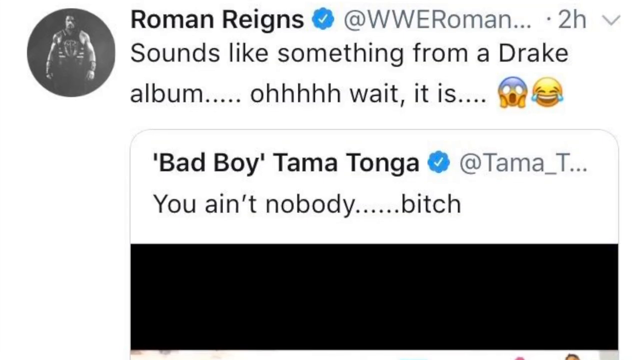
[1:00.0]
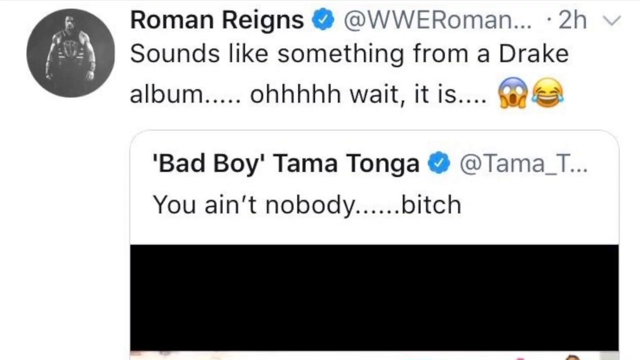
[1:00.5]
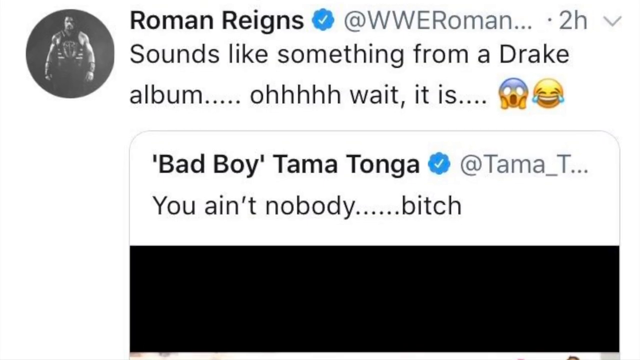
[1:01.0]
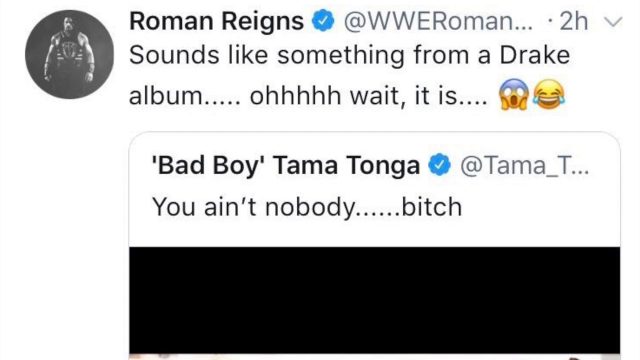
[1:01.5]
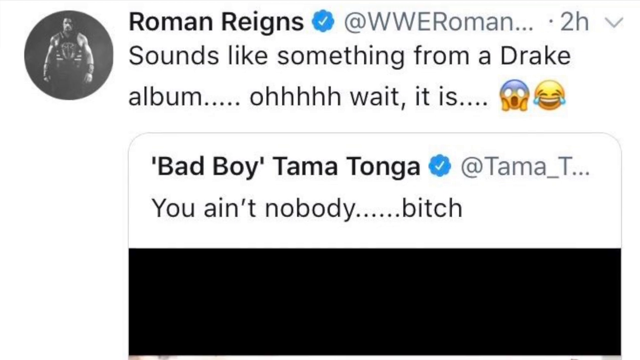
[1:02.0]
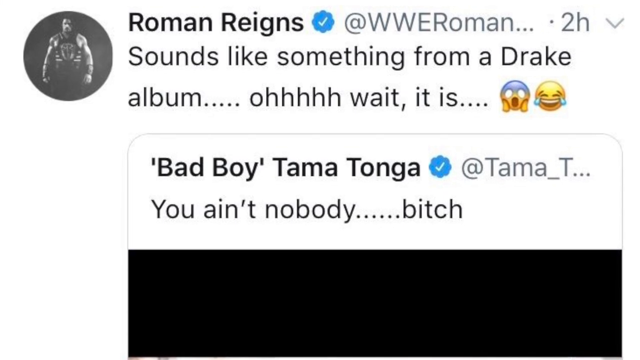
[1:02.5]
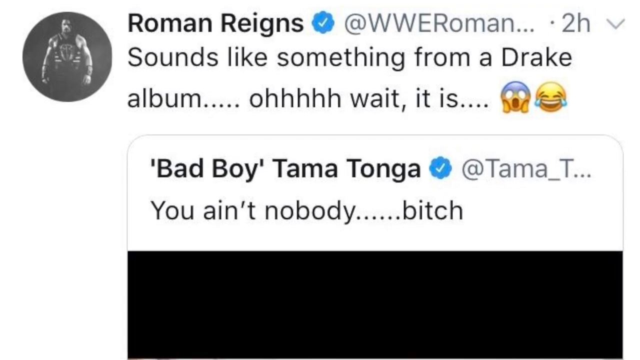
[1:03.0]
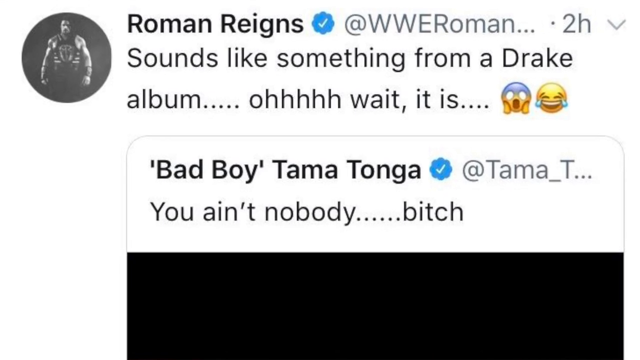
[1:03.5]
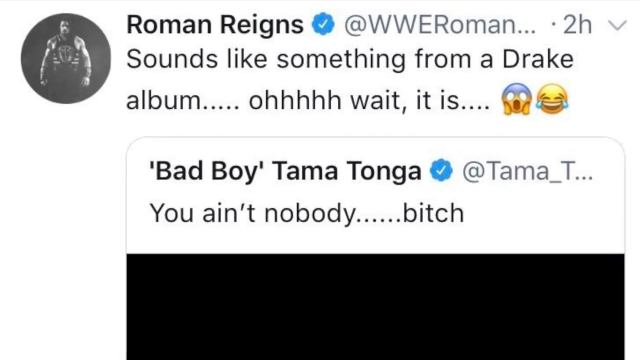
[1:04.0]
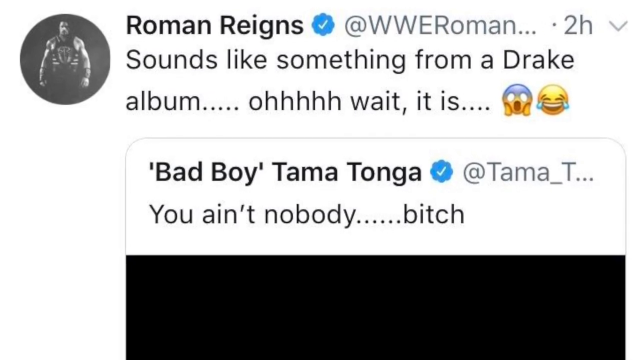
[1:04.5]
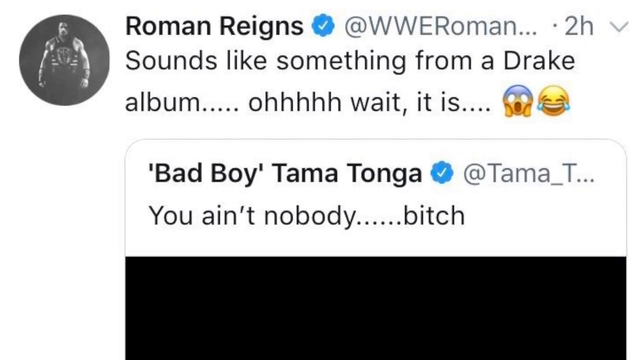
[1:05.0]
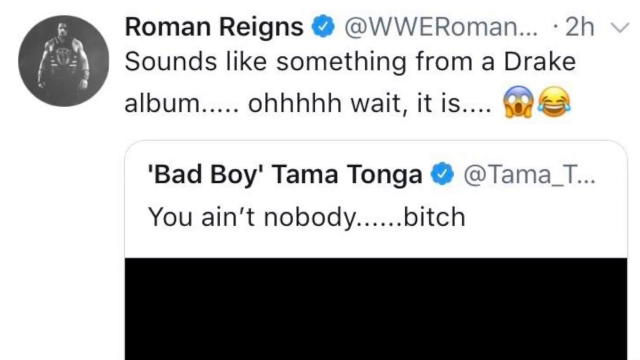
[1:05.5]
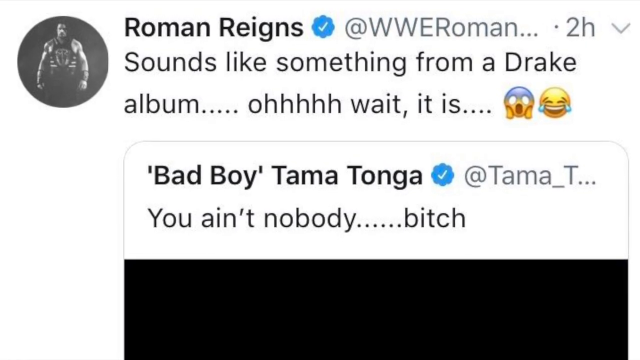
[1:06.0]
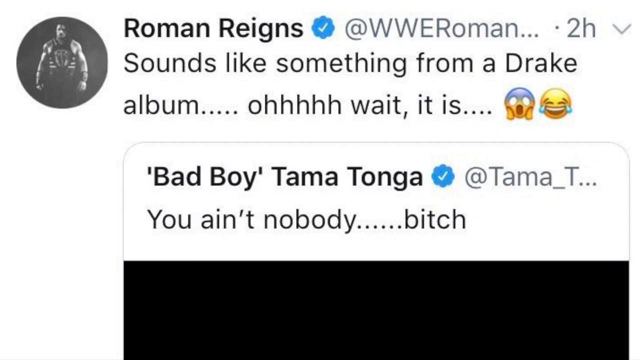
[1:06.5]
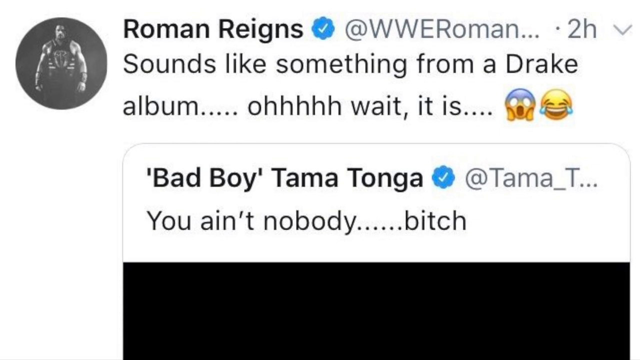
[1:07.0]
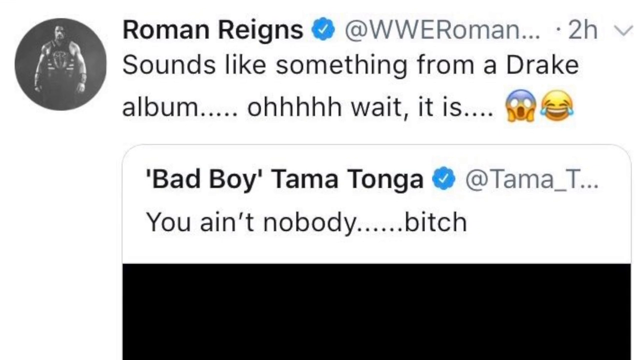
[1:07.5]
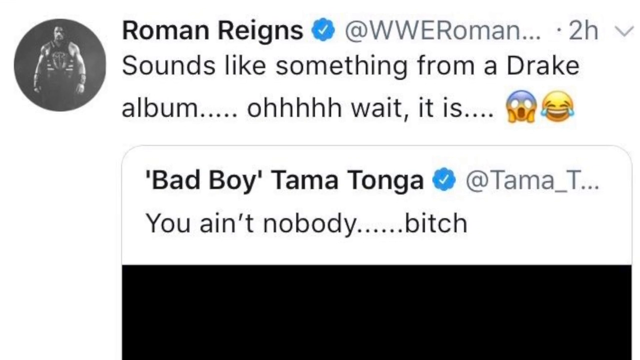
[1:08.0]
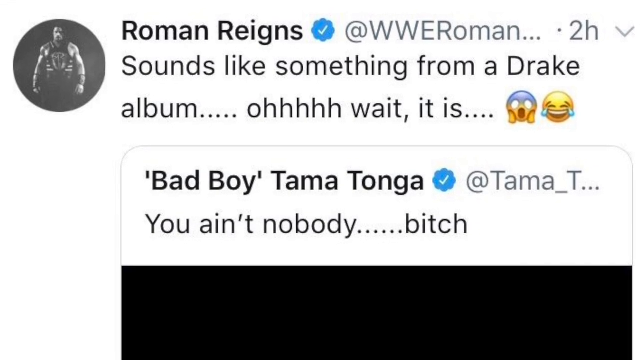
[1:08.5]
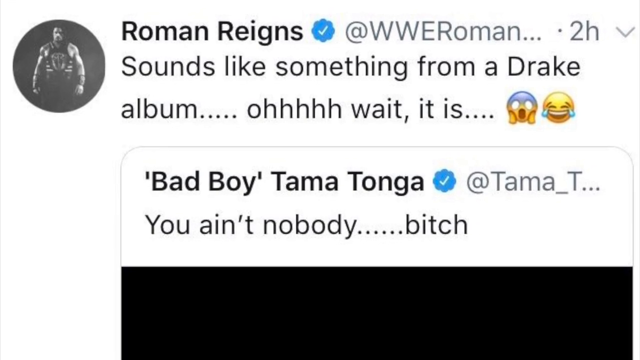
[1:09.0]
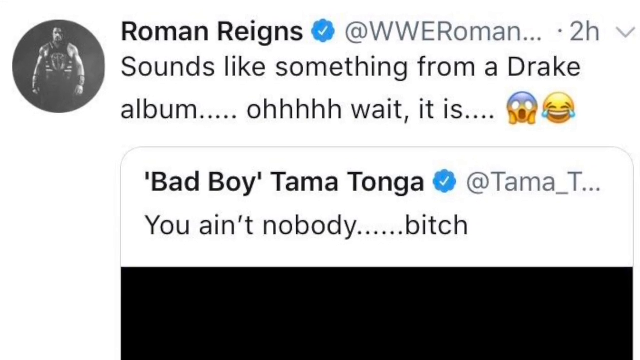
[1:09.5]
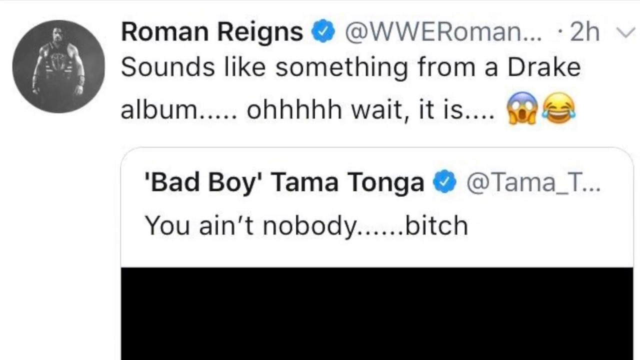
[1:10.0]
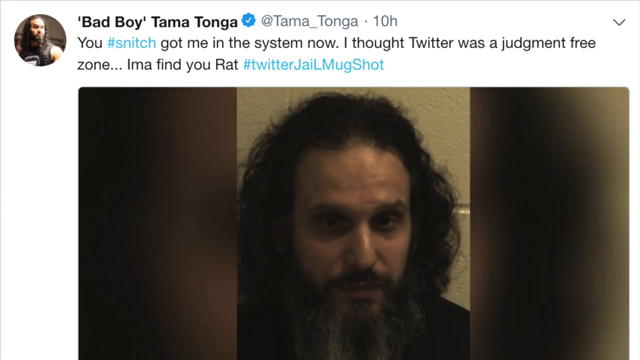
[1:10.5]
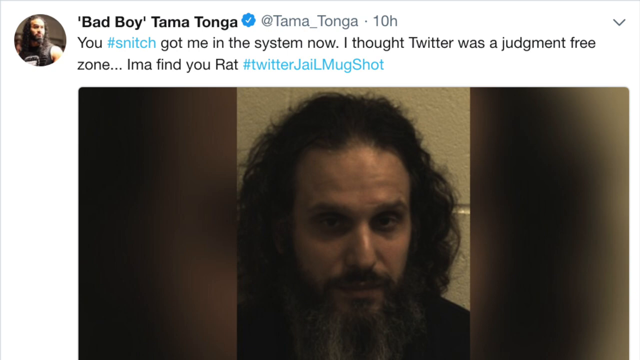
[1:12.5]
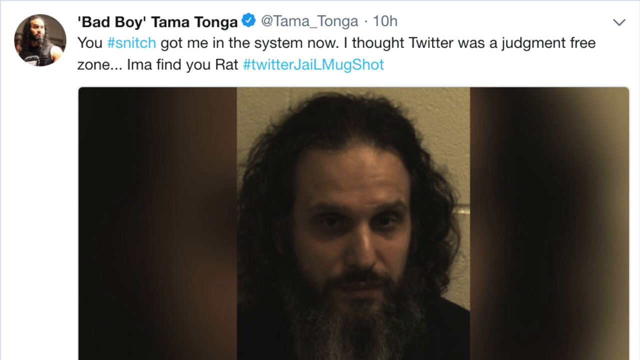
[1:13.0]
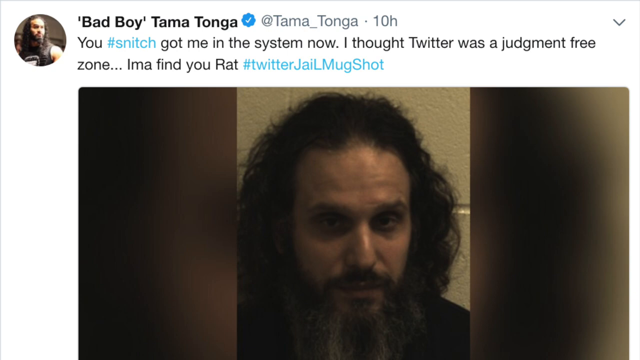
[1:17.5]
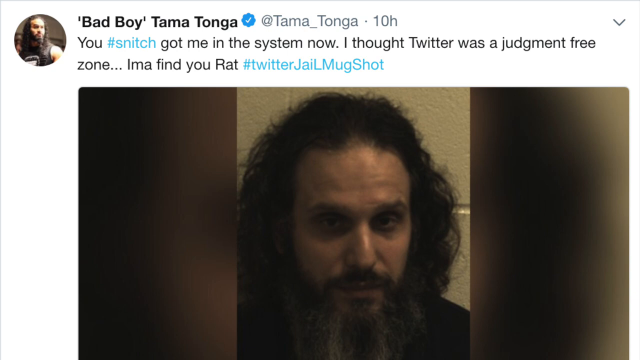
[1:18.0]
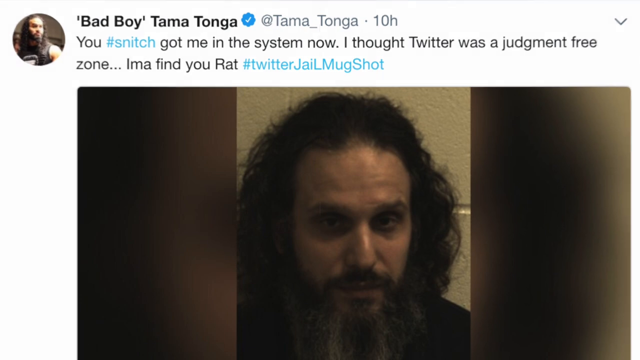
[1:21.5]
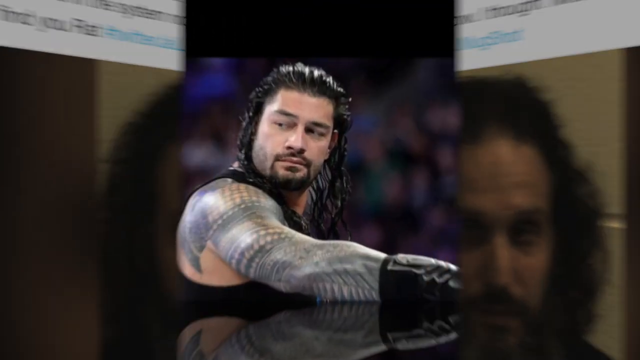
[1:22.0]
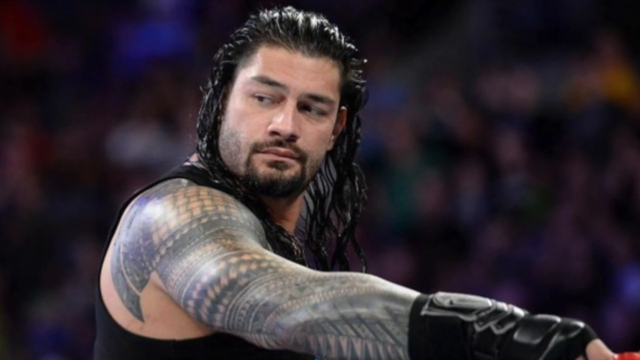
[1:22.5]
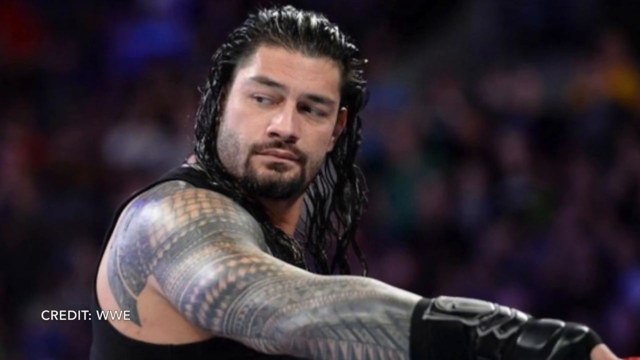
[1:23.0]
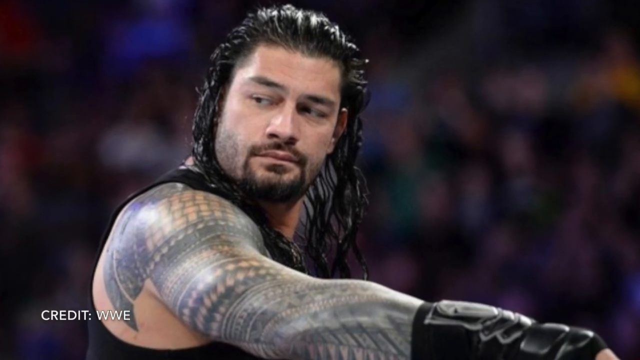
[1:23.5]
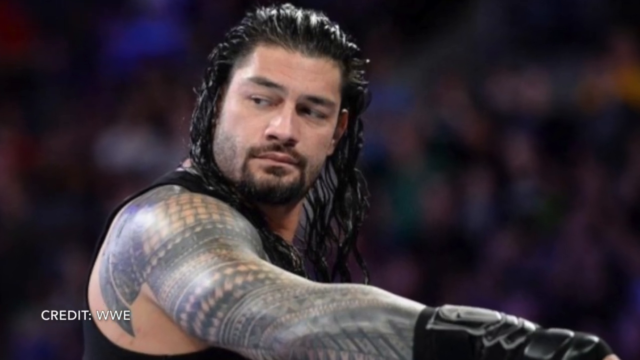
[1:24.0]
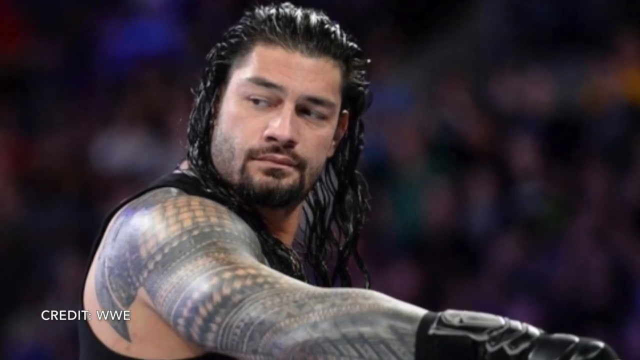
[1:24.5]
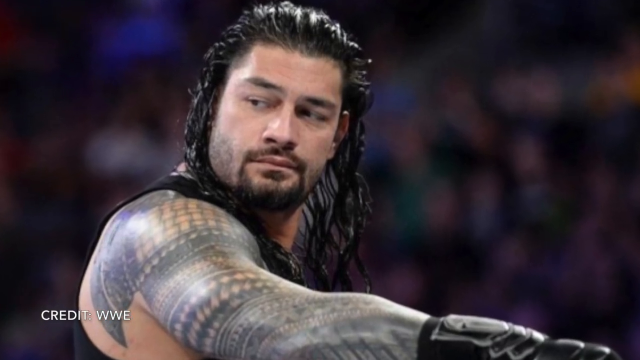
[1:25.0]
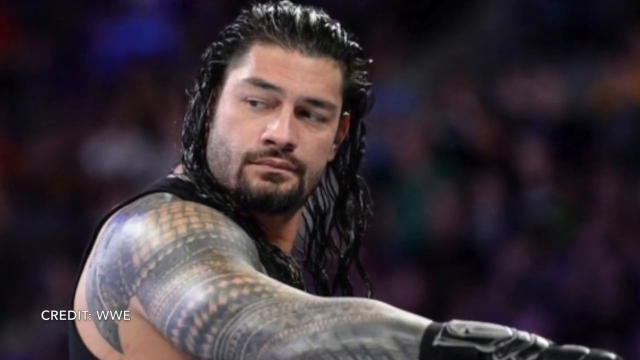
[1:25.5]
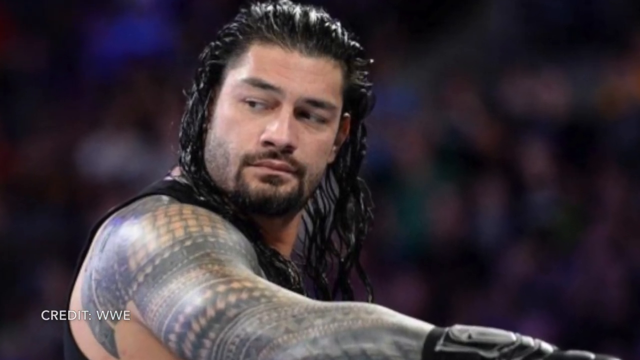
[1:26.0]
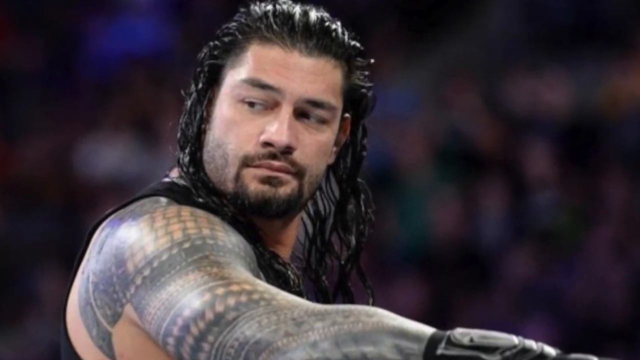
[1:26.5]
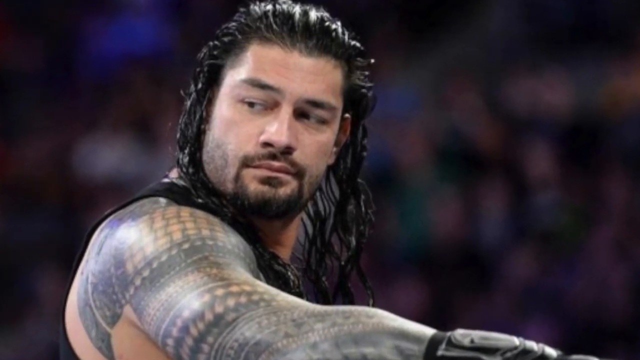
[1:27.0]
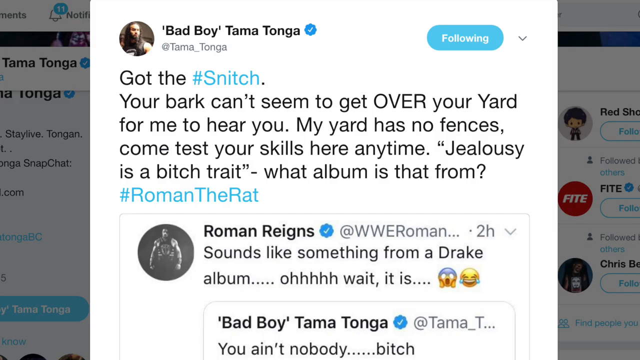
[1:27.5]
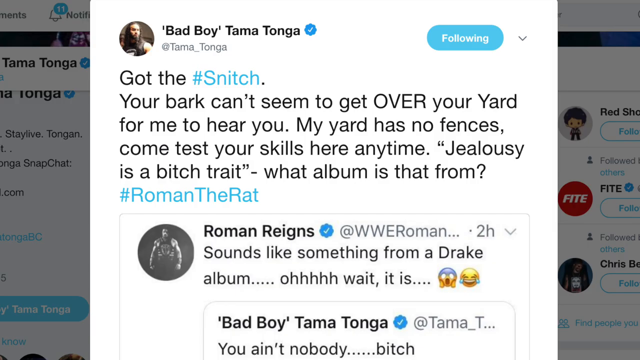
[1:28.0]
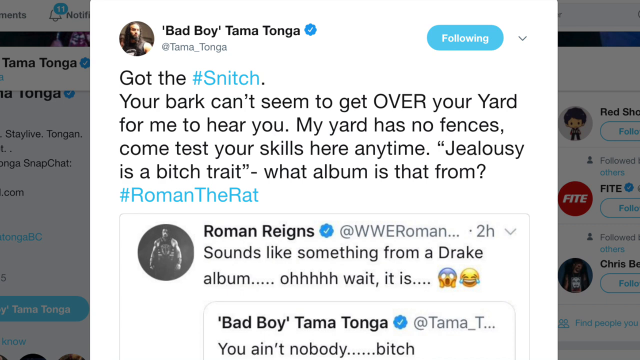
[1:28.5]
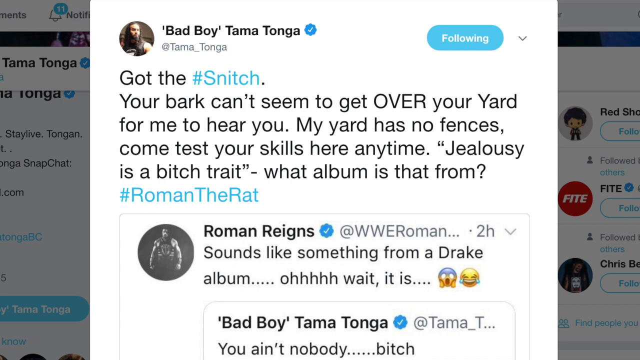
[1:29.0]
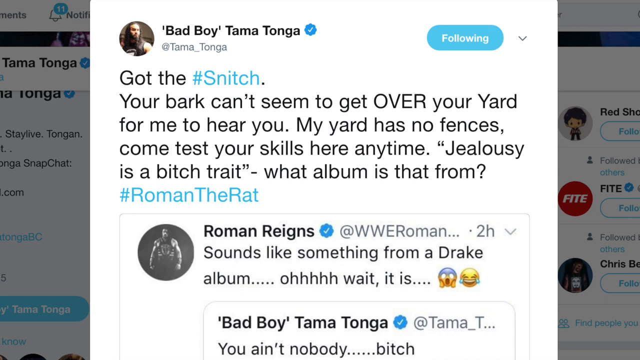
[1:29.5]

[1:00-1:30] A Twitter post from a person named Roman Rains appears, with a blue checkmark next to his name and the handle "@wweroman", followed by some dots. Underneath, black text says "sounds like something from a Drake album oh wait it is", followed by two emojis. Below that is a retweet of a post by Bad Boy Tama Tonga, also with a blue check mark, that says "you ain't nobody", followed by some dots and a cuss word. The camera seems to zoom in on the post. The video then cuts to another post by Bad Boy Tama Tonga that says "you #snitch got me in the system now i thought twitter was a judgment free zone i'ma find you rat" and "#twitter jail mugshot". Underneath is a picture of a person's mugshot showing long black hair and a long beard with some gray on the chin.